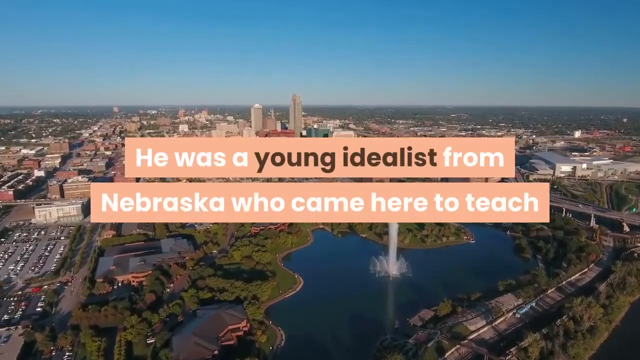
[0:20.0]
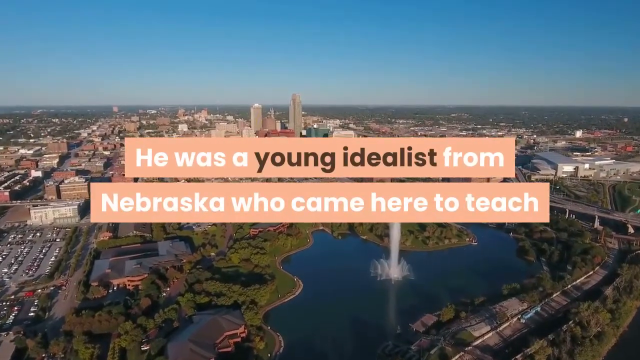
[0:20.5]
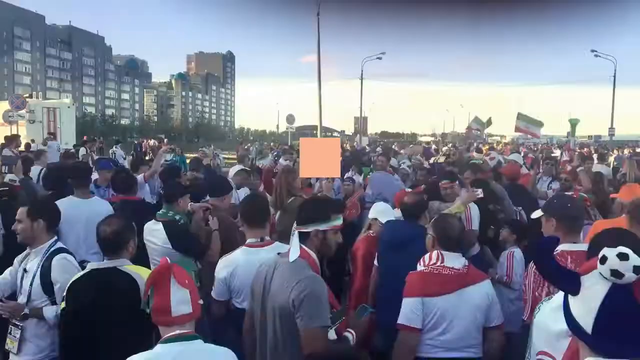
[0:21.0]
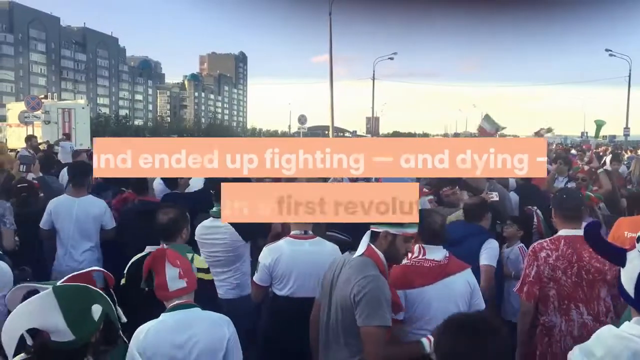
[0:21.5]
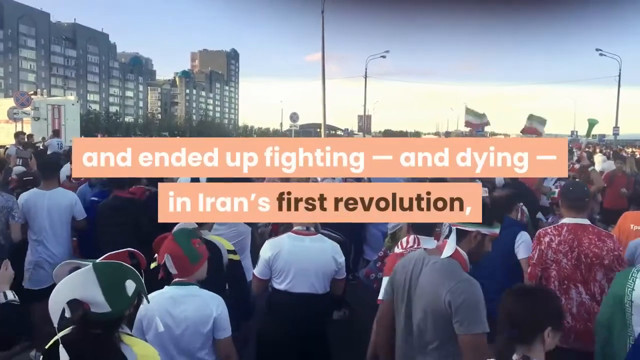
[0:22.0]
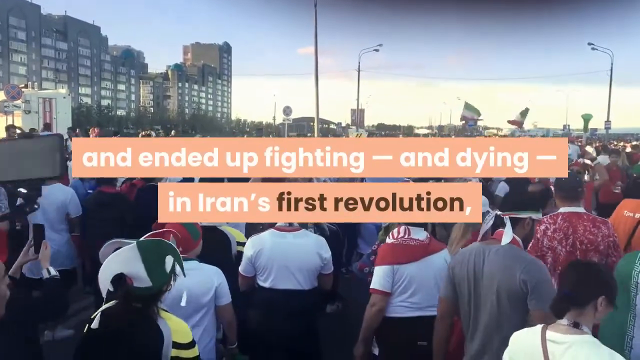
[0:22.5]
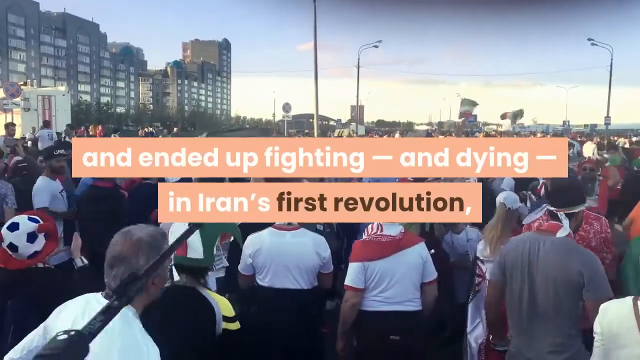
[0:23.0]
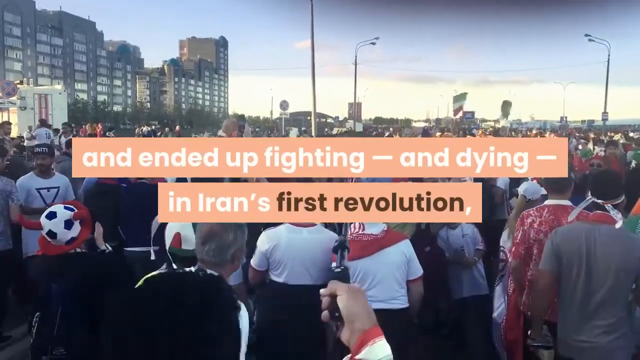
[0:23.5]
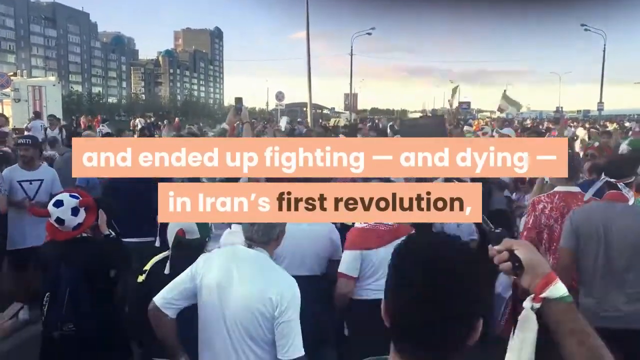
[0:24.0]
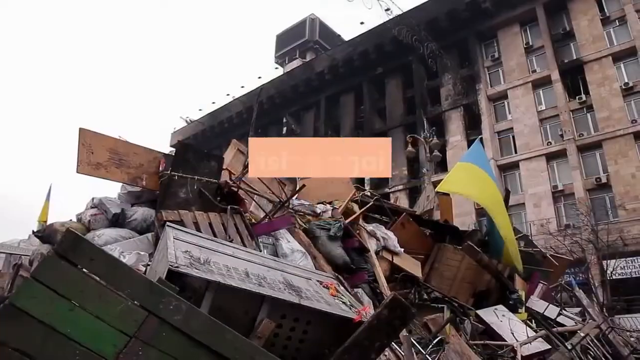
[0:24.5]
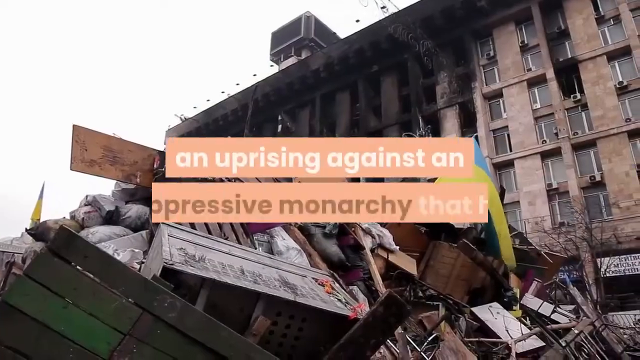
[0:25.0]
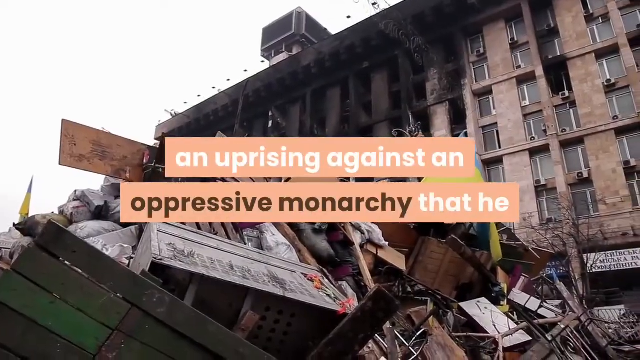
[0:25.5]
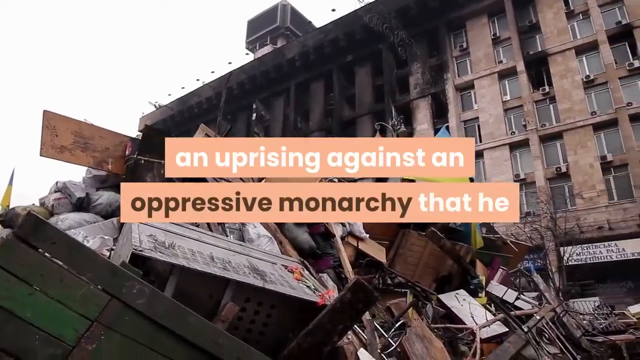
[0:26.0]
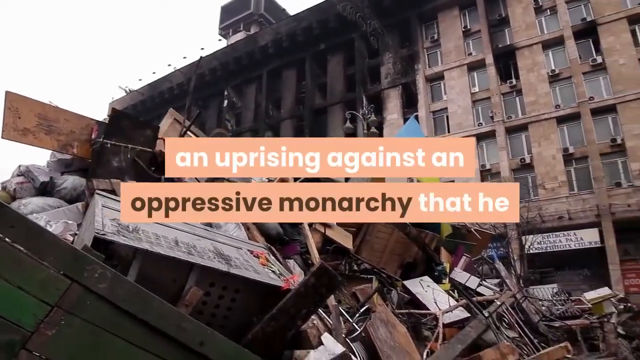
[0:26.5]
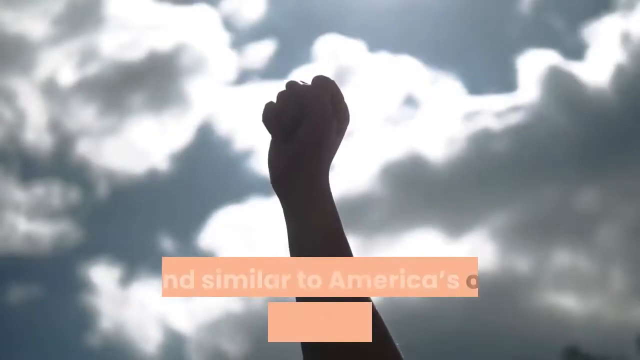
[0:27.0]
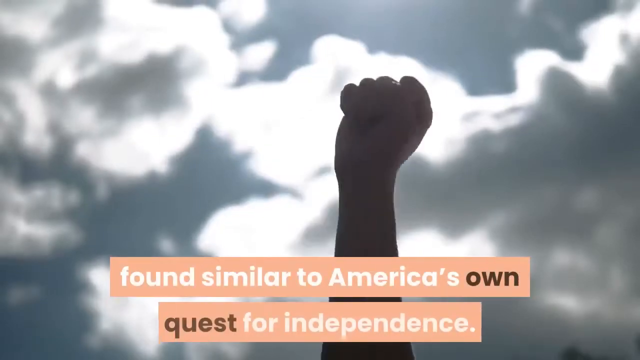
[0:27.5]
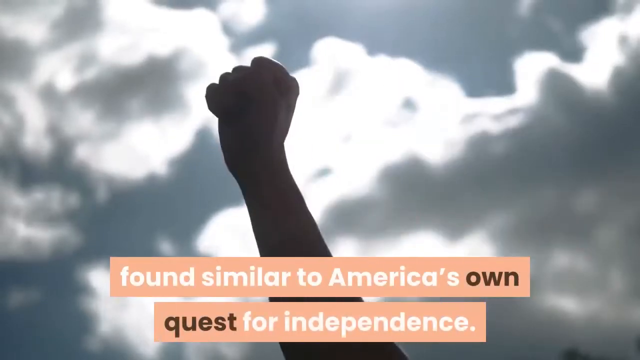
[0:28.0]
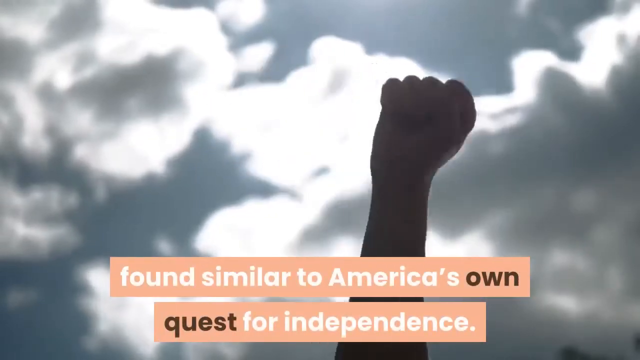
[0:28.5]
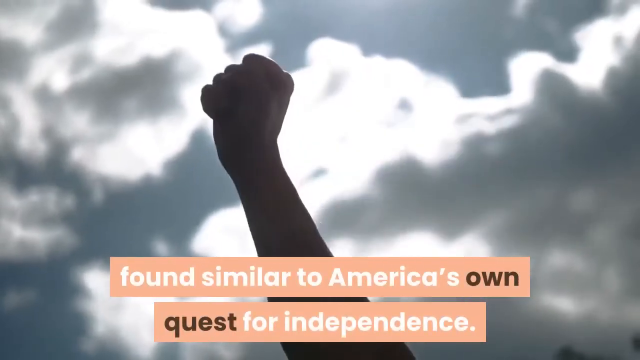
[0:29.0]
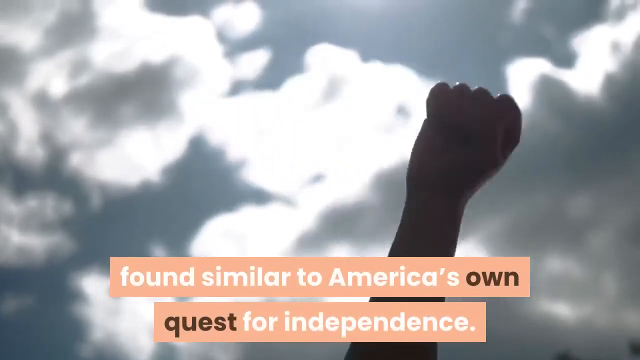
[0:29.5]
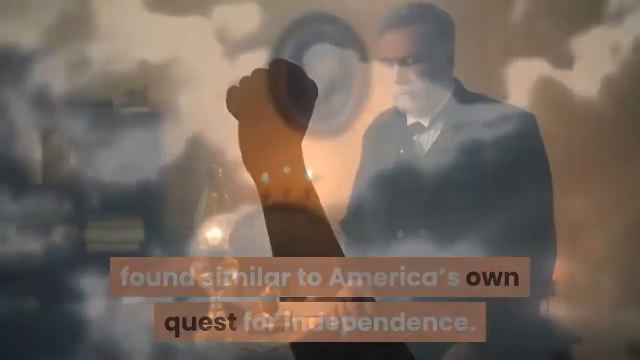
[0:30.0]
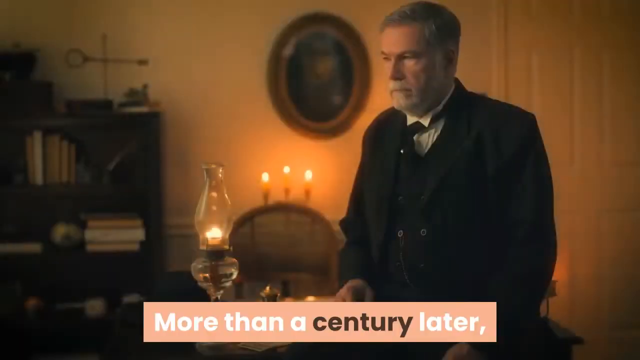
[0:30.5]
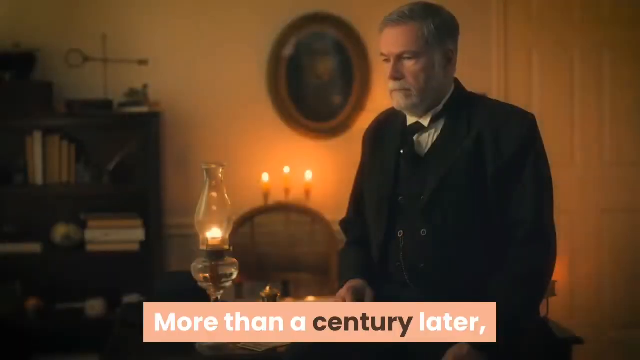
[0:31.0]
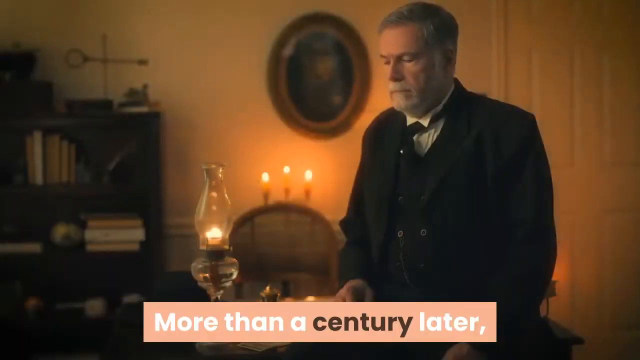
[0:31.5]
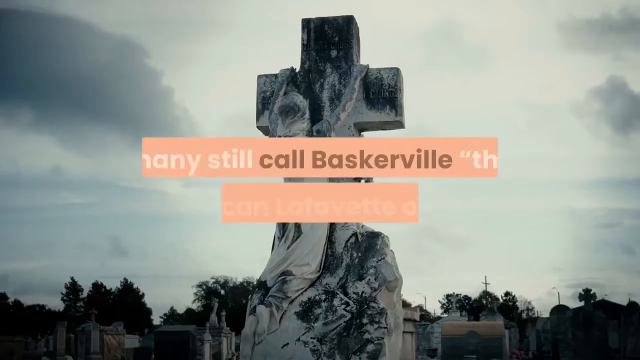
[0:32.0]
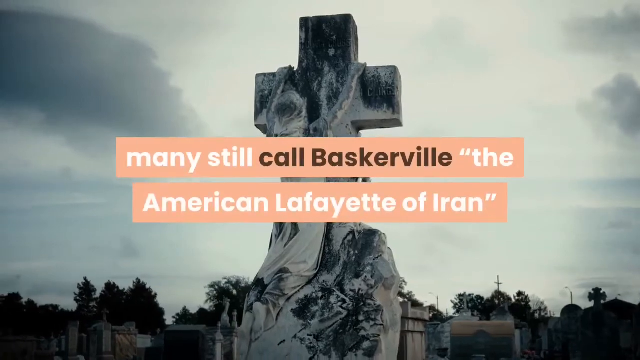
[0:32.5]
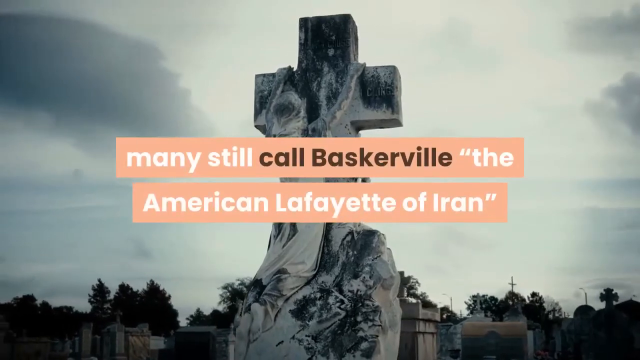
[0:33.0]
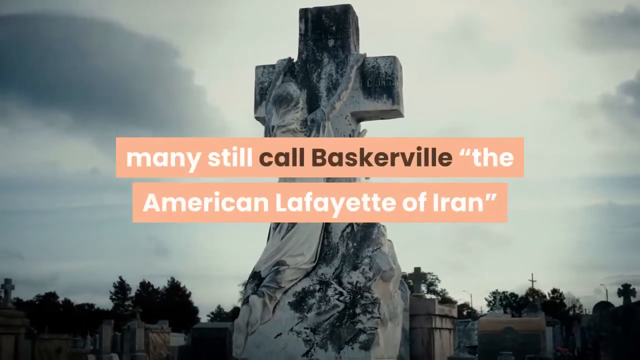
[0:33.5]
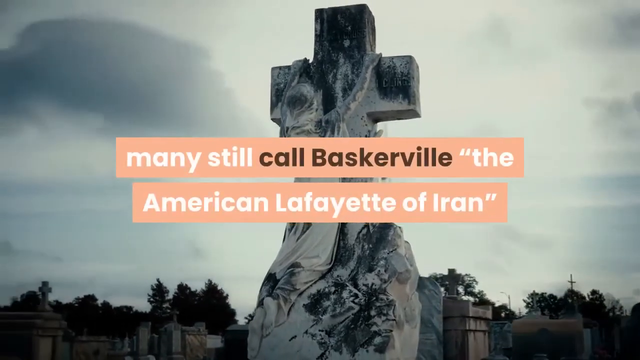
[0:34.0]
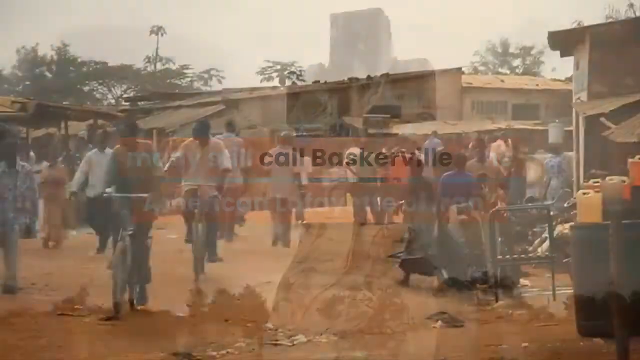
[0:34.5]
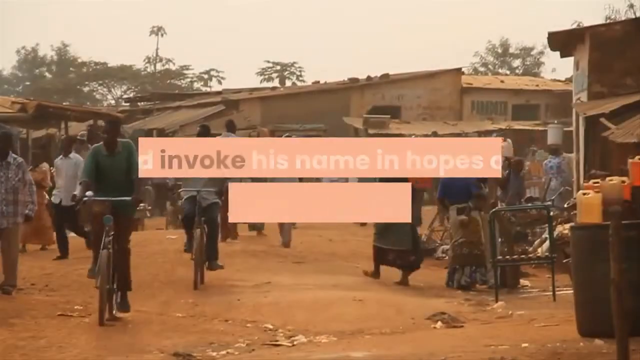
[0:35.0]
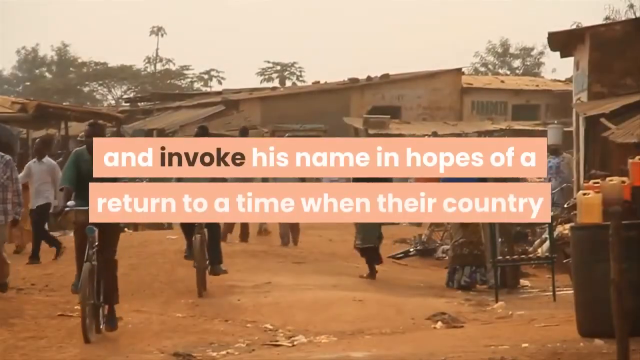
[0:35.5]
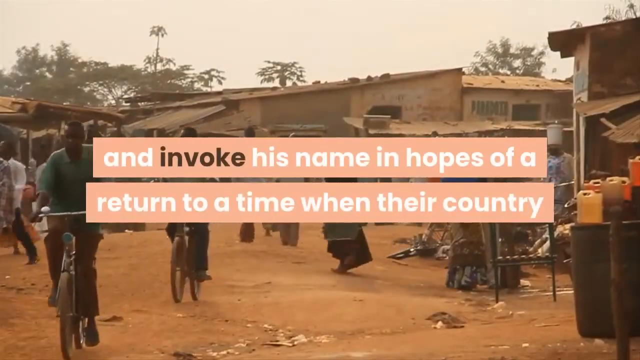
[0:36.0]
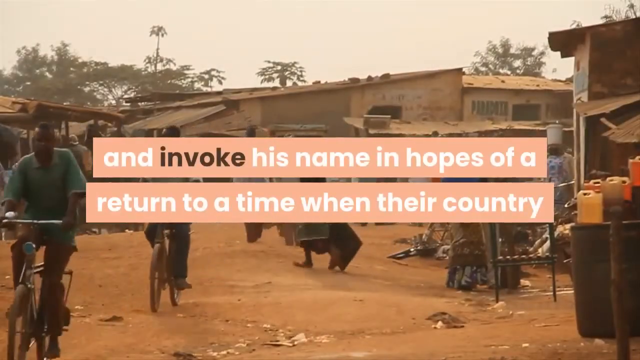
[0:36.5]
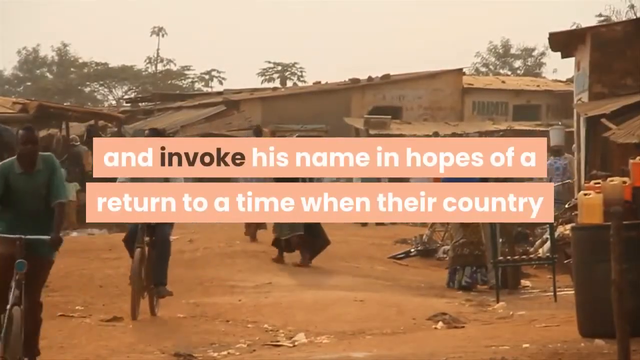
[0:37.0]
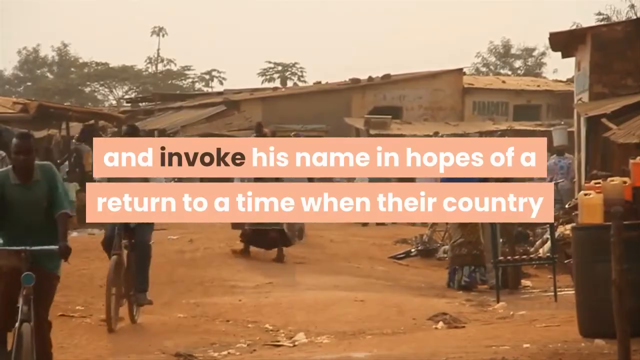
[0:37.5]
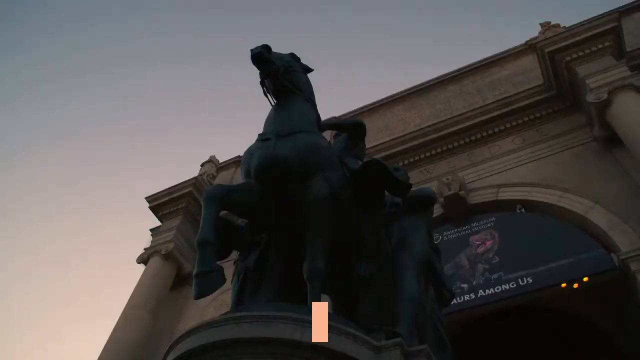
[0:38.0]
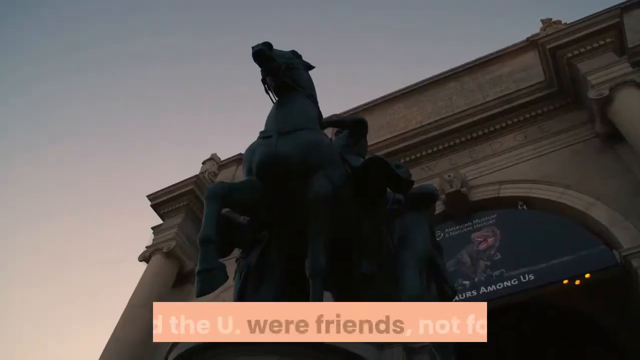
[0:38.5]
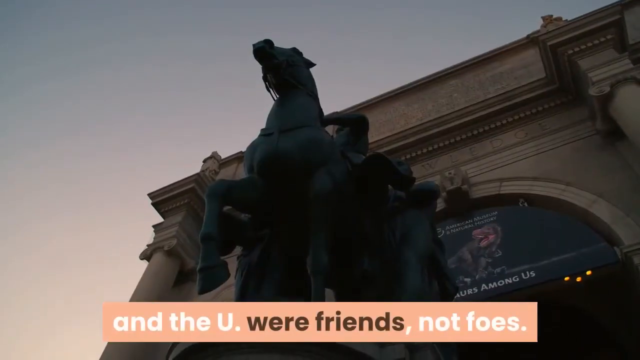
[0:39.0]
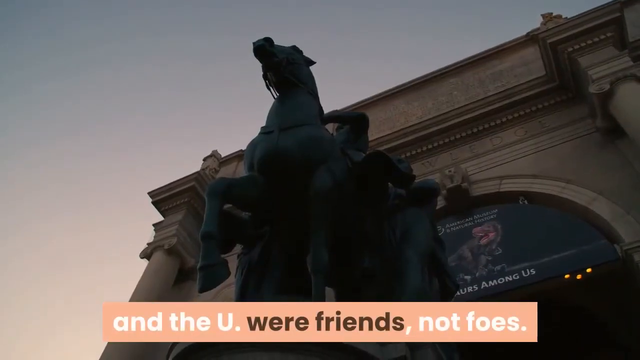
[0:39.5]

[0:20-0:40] The aerial view of the city in Nebraska gives way to a large crowd protesting in Iran: a building is in the background and many people are gathered, almost like a mob, shouting and waving things. Next is the rubble and debris of a destroyed building that definitely looks like a war zone. Then an arm and fist wave in the air as if the person is shouting. An old setting follows, probably the early 1900s, showing a man with a beard in a black suit, an oil lamp on his desk and a bookcase in the background. Then a statue of a cross with a child draped across the front of it, holding on. Next is a dirt road with dilapidated buildings, people riding bikes and walking in what looks like it might be a market area, with gasoline-type cans that have water in them; it is clearly a poor area. Then a building appears with a statue of a man on a horse in front of it. On-screen words describe a young idealist from Nebraska who goes to Iran to teach, ends up participating in its first revolution against its monarchy, and how people still love him today.